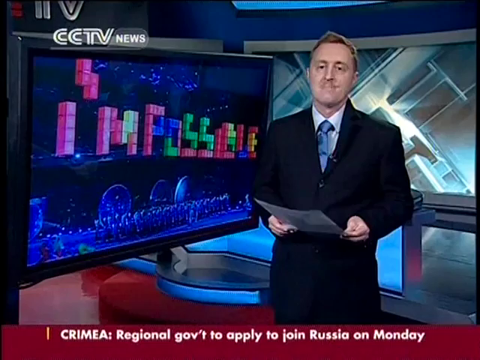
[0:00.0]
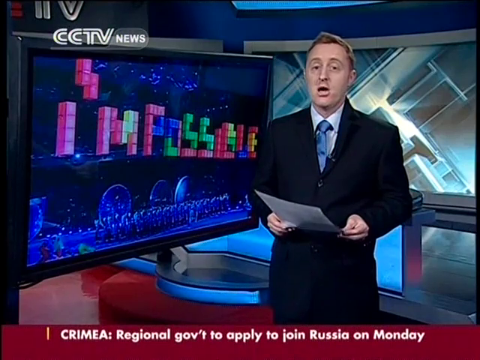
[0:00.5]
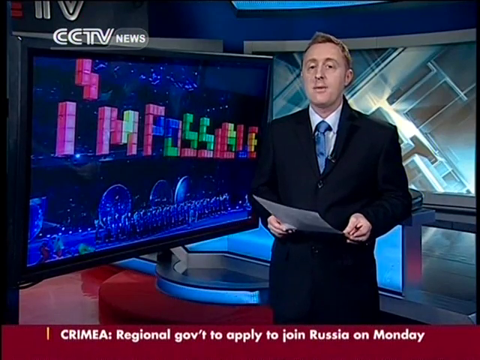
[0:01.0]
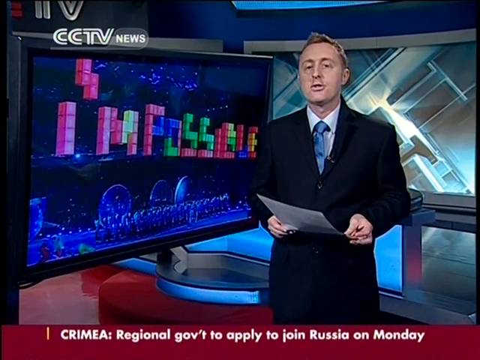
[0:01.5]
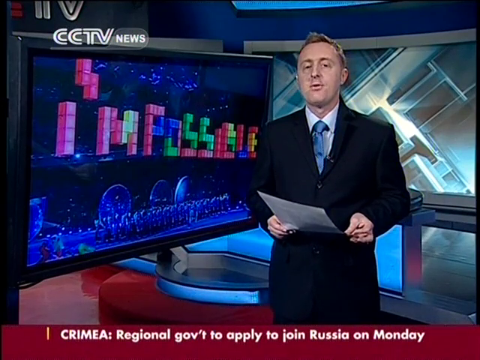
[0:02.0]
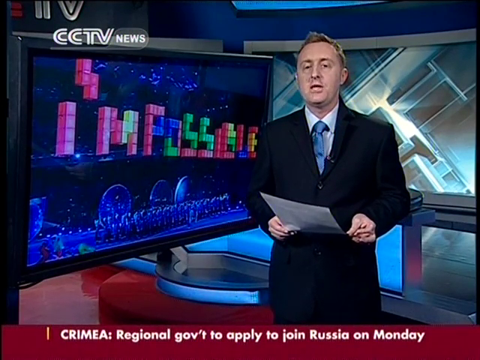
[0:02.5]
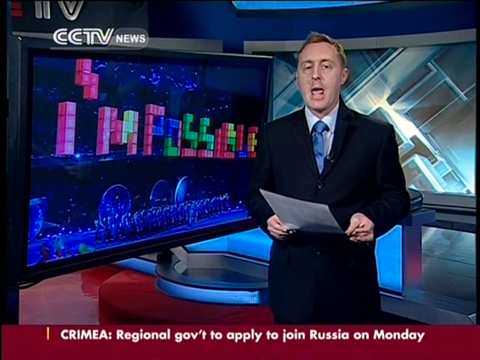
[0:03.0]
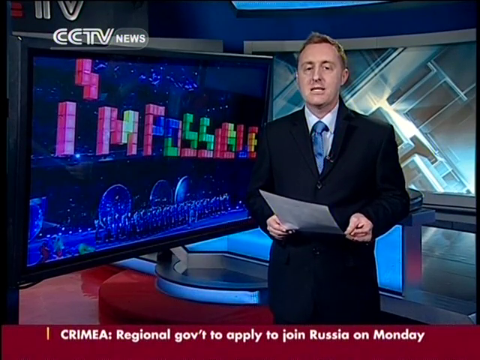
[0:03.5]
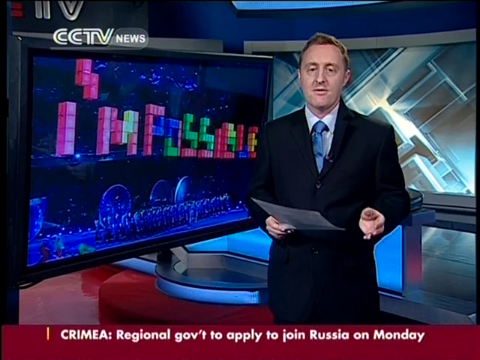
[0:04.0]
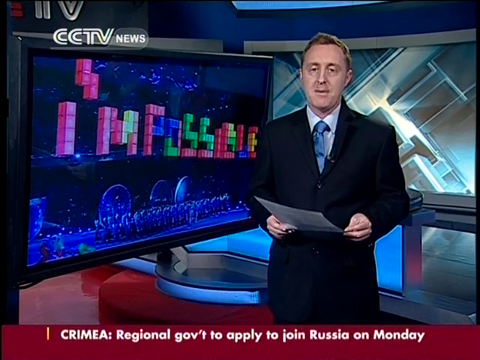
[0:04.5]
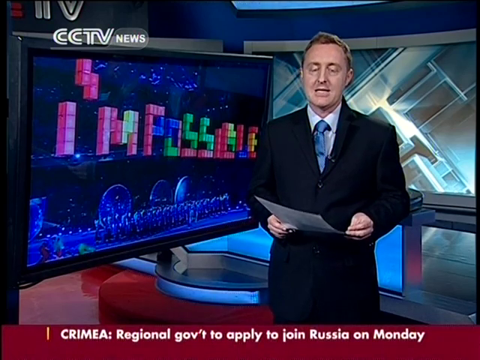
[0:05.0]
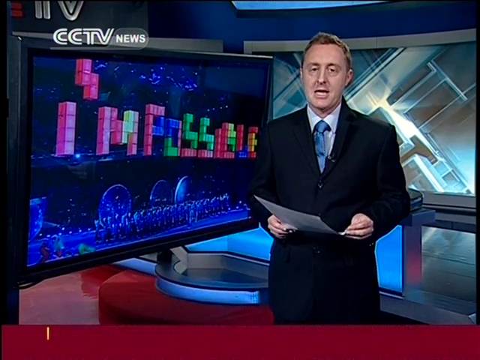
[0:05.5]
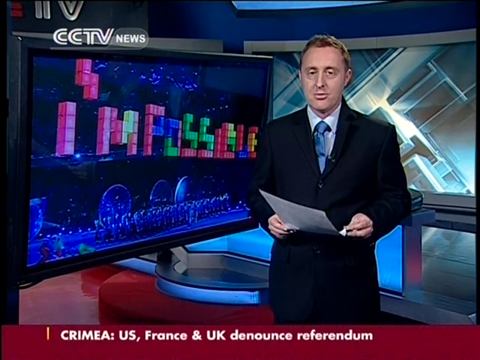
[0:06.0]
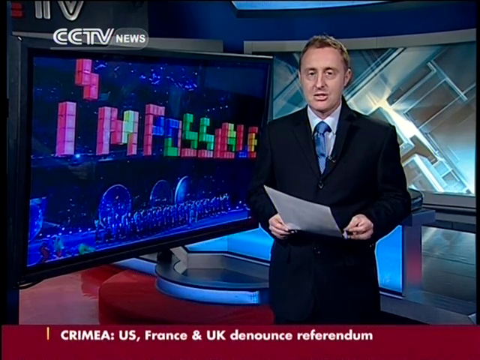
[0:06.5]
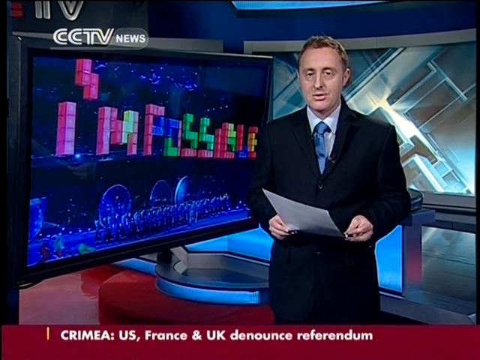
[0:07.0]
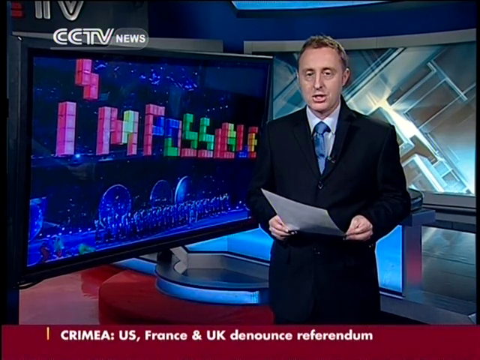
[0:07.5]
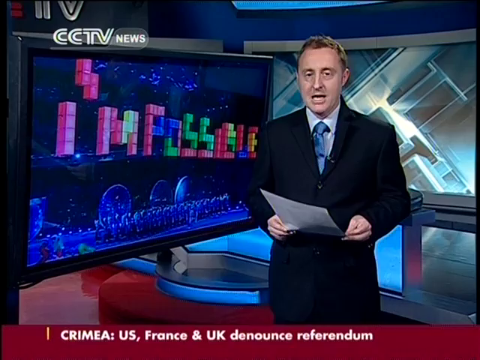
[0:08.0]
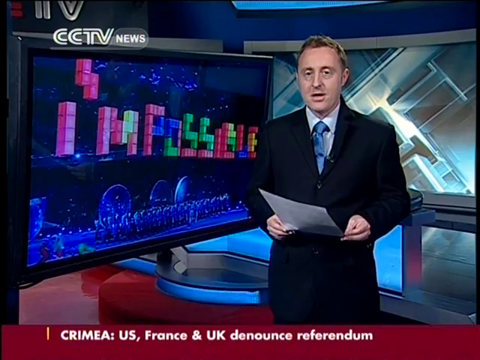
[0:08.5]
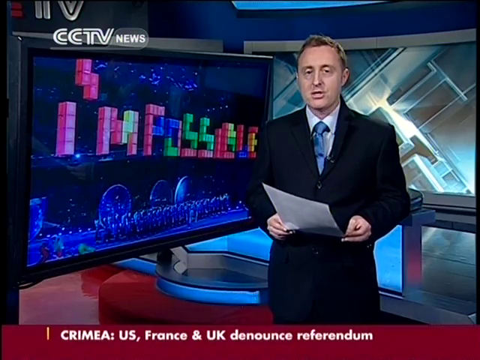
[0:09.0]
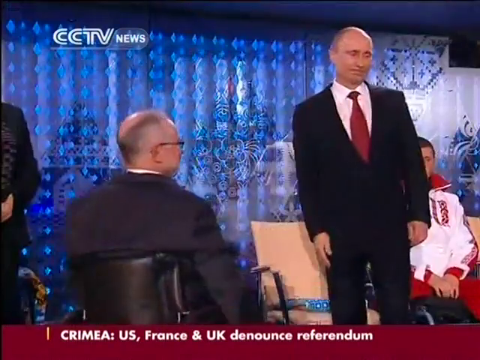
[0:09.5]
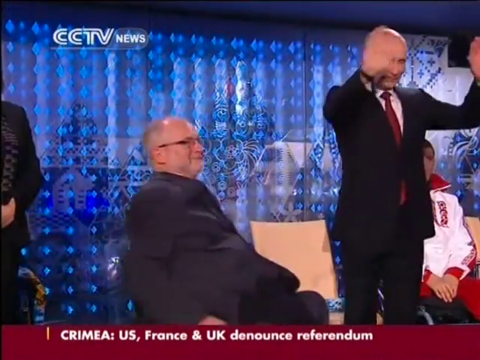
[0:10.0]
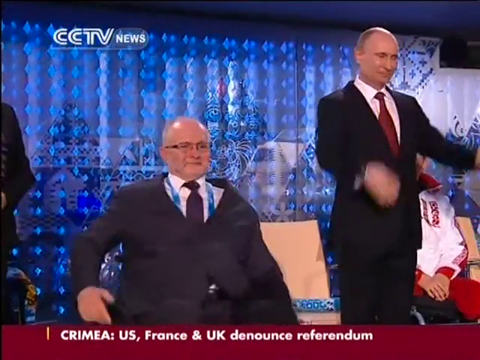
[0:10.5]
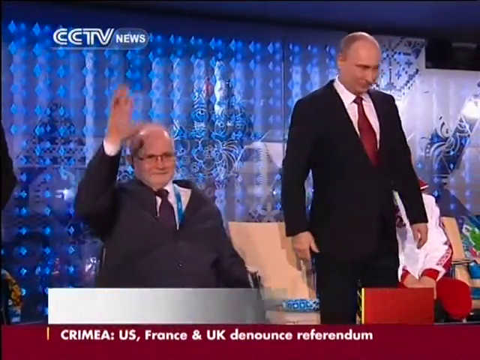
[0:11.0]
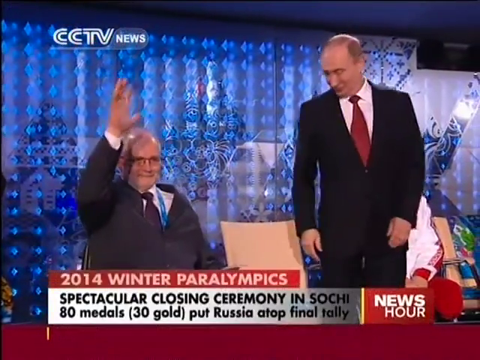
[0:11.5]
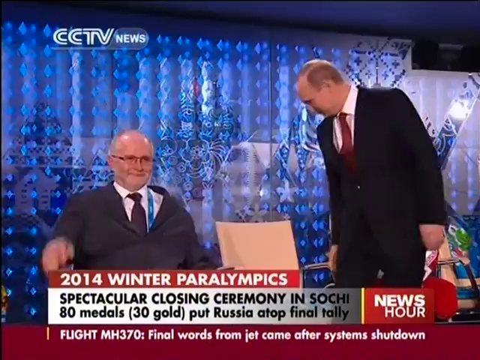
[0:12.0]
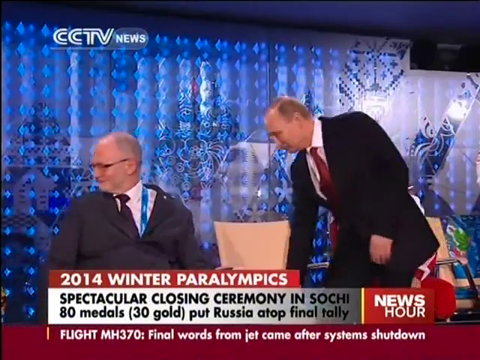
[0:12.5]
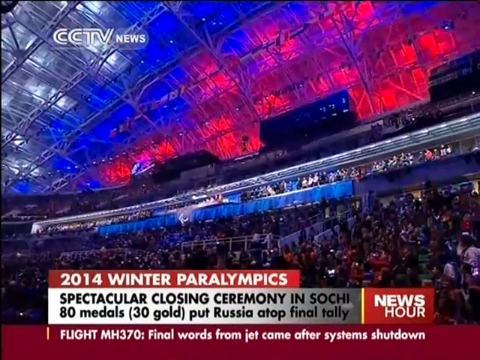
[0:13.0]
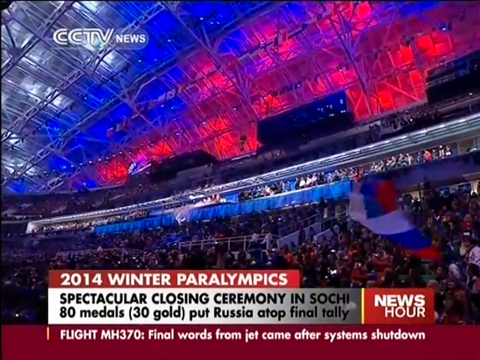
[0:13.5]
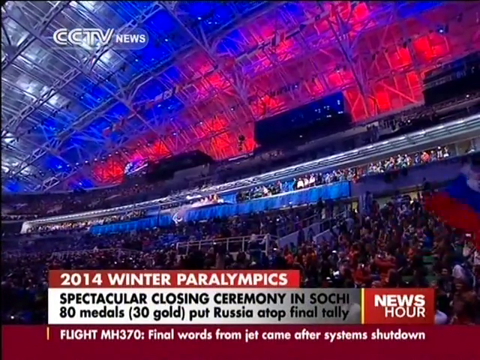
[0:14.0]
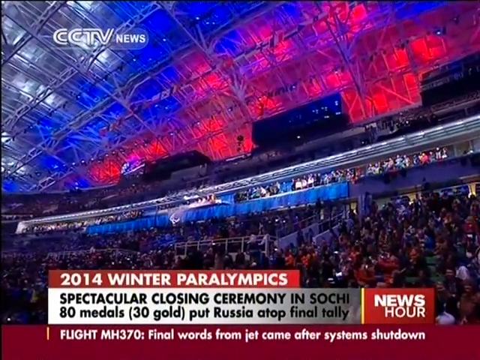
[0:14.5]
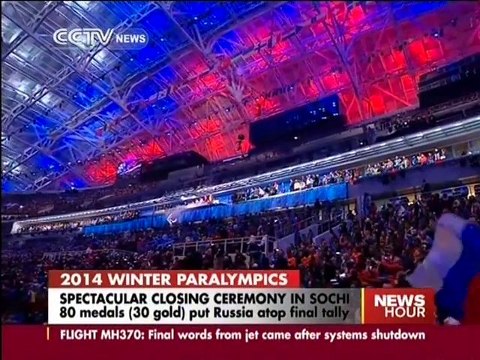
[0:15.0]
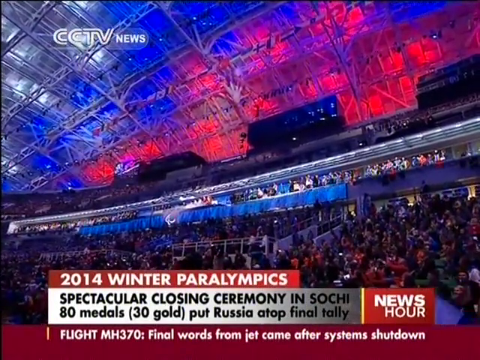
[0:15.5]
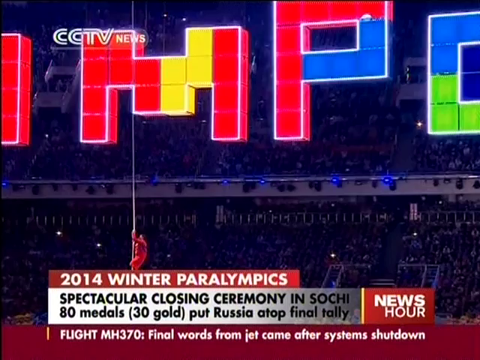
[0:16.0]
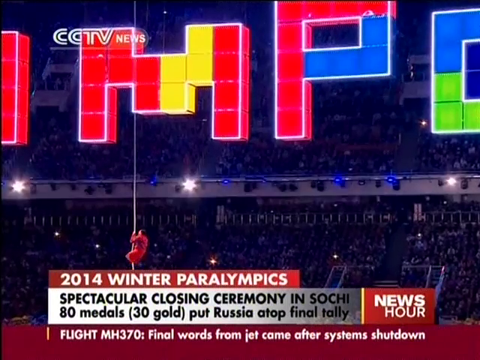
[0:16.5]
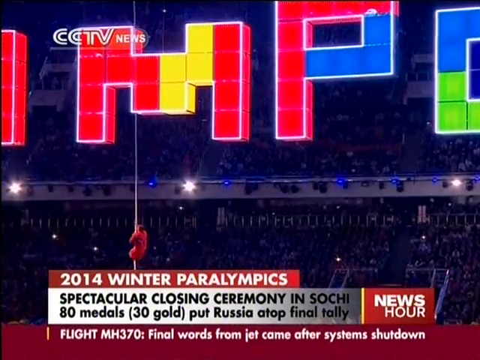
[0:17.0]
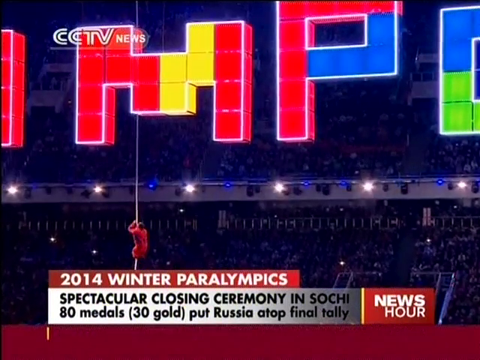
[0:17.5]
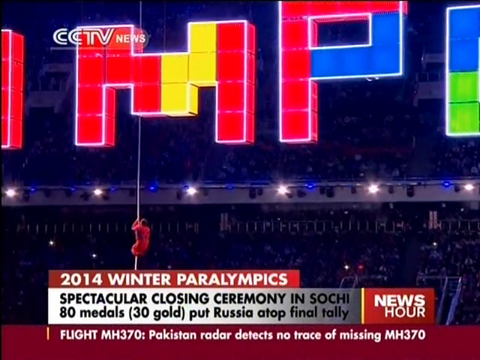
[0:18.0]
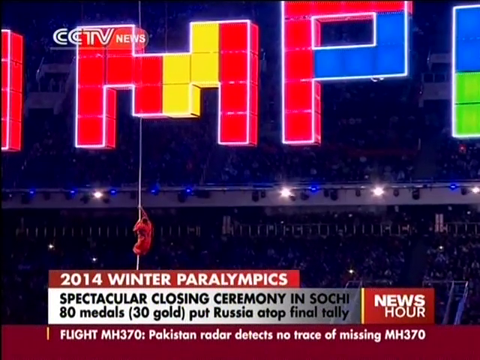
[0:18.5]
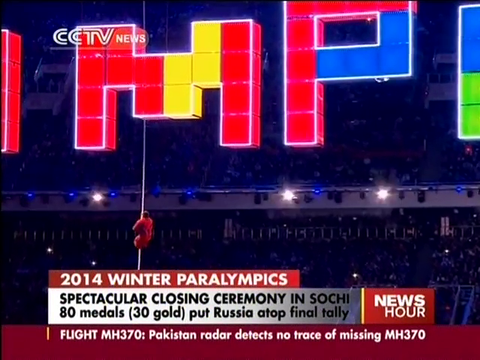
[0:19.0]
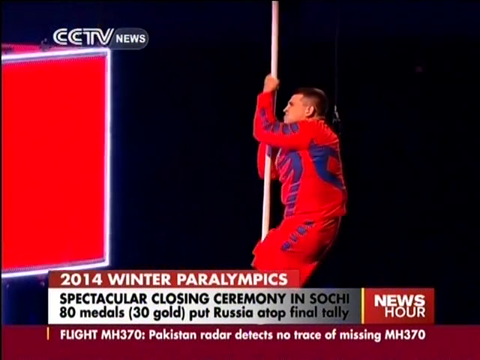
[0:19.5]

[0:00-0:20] A news reporter looks directly at the camera. He is a middle-aged man in a dark blue suit with the jacket buttoned up, a very pale light blue button-up shirt and a medium blue tie. He has dirty blonde hair with a receding hairline. His arms are partially bent up to his waist at a 90-degree angle, and he holds a paper in his right hand as he speaks to the camera. Behind the reporter, to his right, is a TV showing a logo for the Paralympics, and behind him to his left is another TV, also showing a logo for the Paralympics. At the bottom of the screen a red bar reads in white lettering "Crimea, U.S., France, and U.K. denounce referendum". The scene then changes to a man who looks like Vladimir Putin on a stage with a chair behind him. He lifts his arms to a little above shoulder height to wave, then looks back to the chair as if he is about to take a seat. A man in a wheelchair is to his right; he is first seen from the back, then turns the wheelchair around to face the same direction as the Putin-like man.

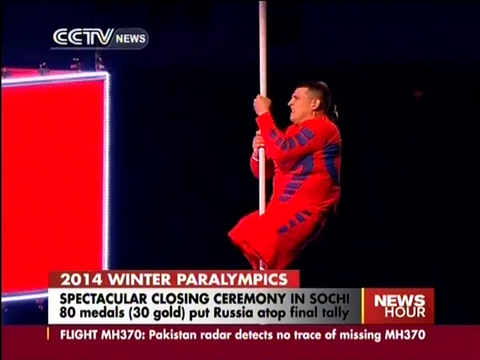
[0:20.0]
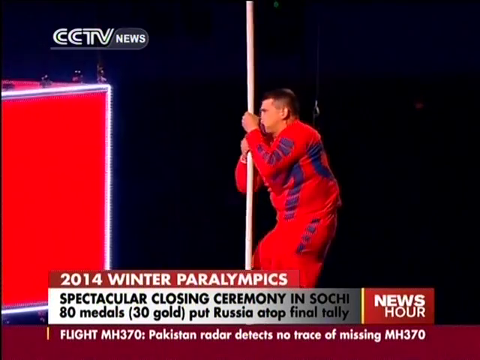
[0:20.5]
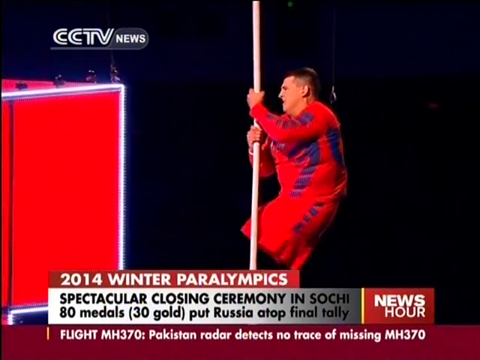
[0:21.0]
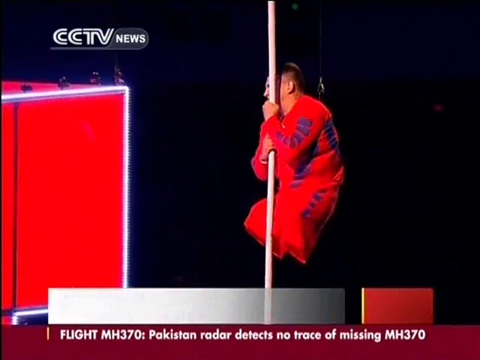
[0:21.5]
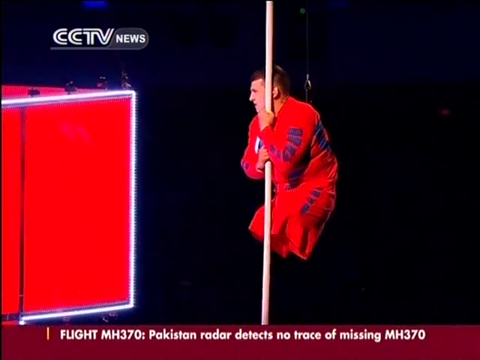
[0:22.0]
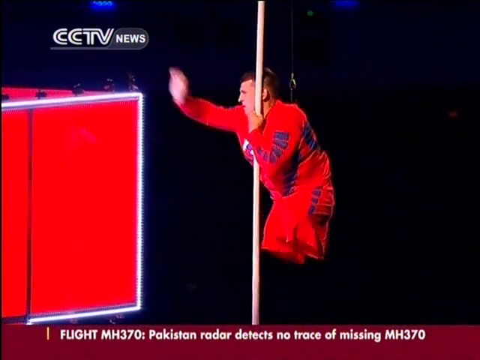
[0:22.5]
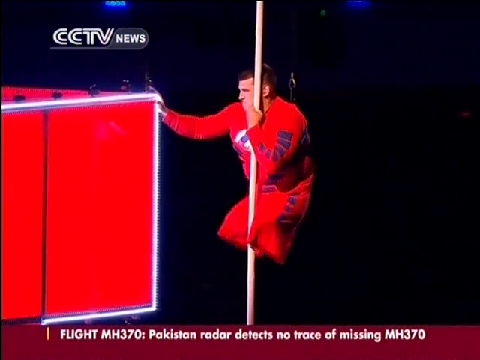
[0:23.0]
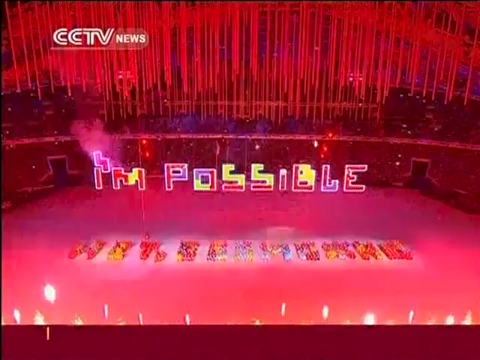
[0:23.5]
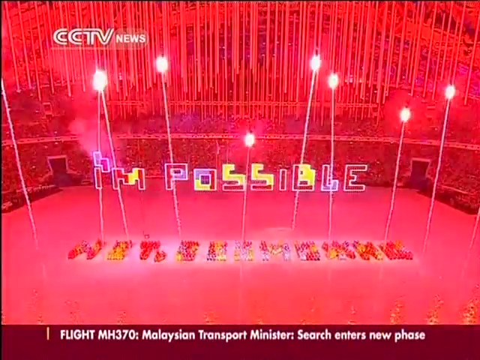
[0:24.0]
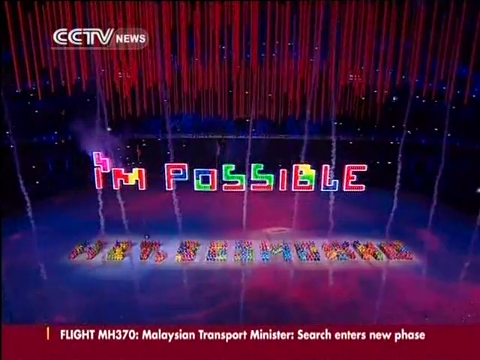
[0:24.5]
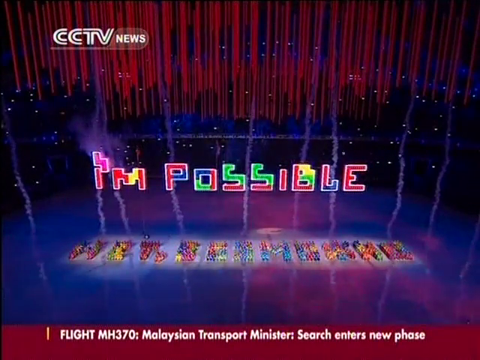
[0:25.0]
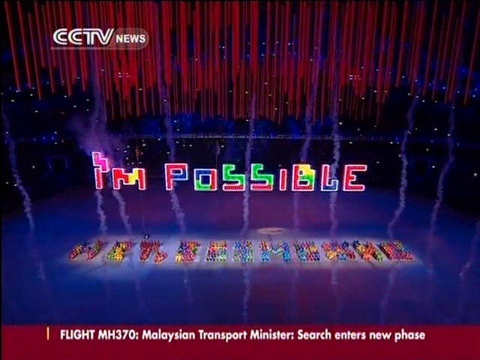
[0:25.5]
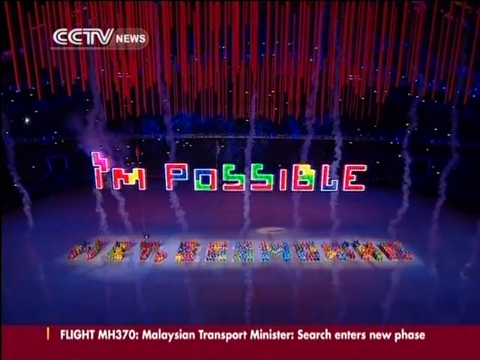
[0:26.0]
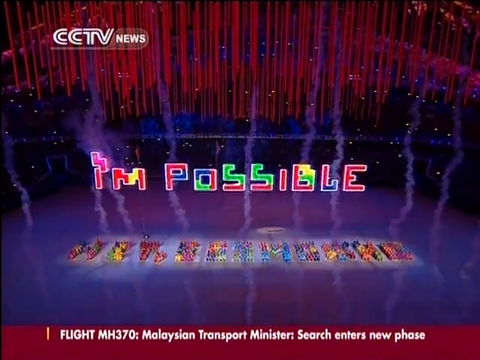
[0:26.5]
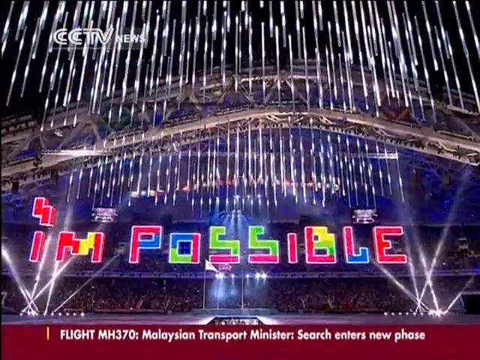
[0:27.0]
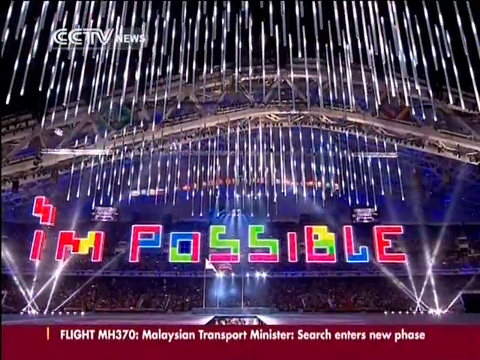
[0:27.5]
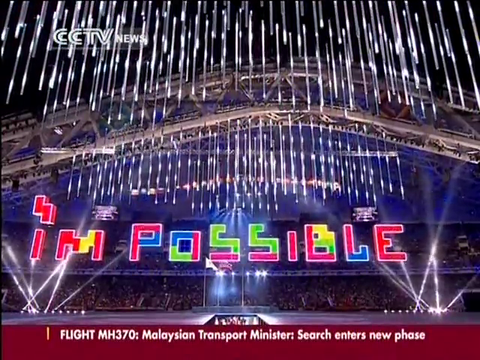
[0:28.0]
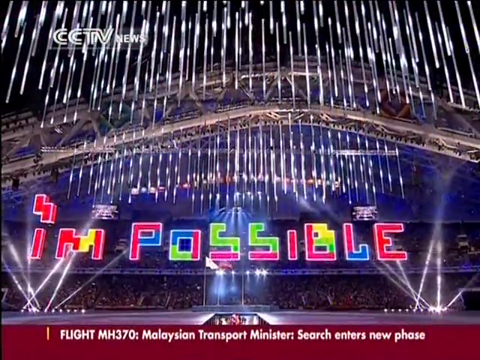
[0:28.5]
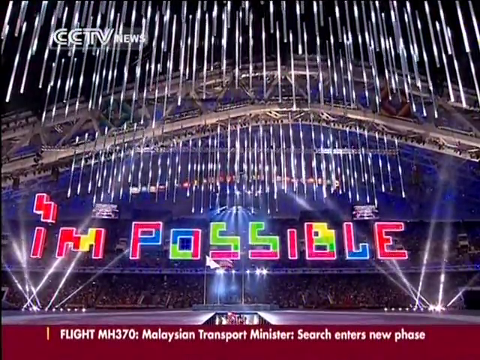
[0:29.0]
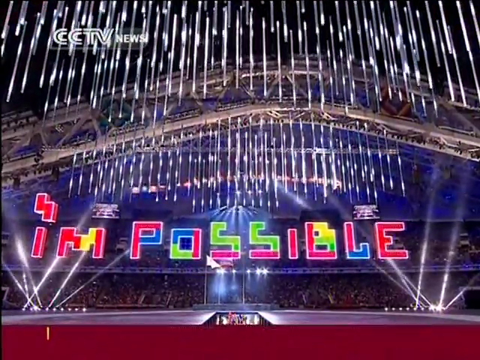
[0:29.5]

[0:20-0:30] A man in a red tracksuit with blue logos on the front and back of the shirt, down the arms and down the legs climbs a rope, using his arms to pull himself up. He places his left arm and hand above his right as he climbs. The man is a double amputee. He then reaches out with his right arm to grab a red box with a silvery white outline and pulls himself to the box with his right arm.